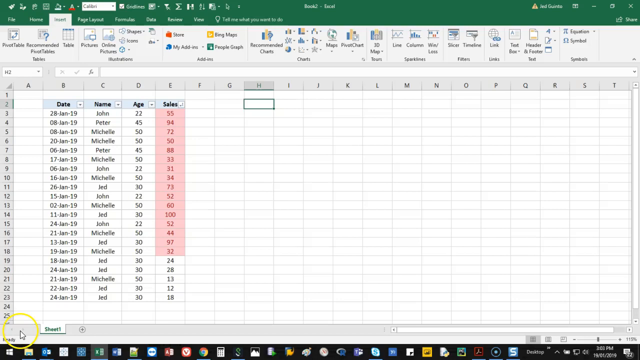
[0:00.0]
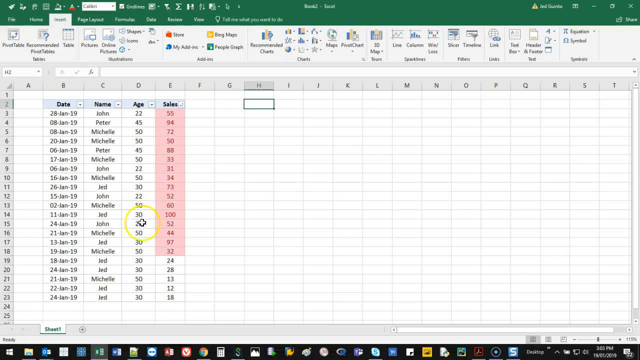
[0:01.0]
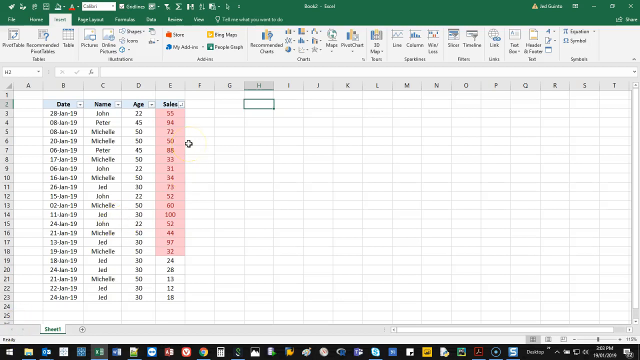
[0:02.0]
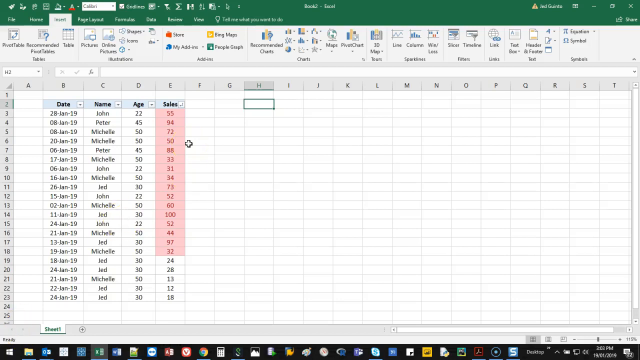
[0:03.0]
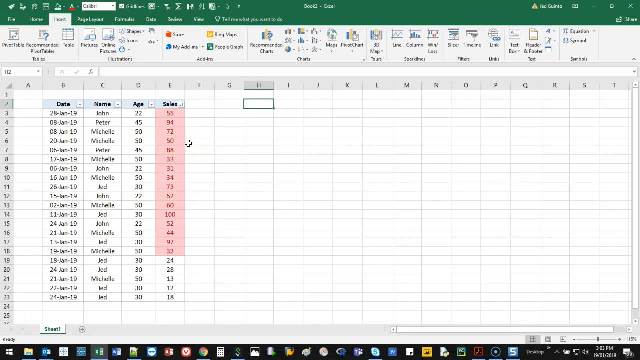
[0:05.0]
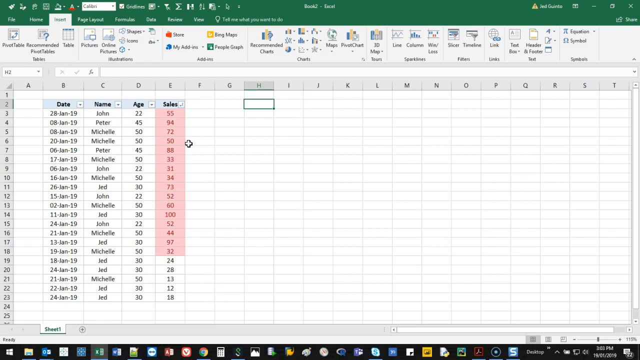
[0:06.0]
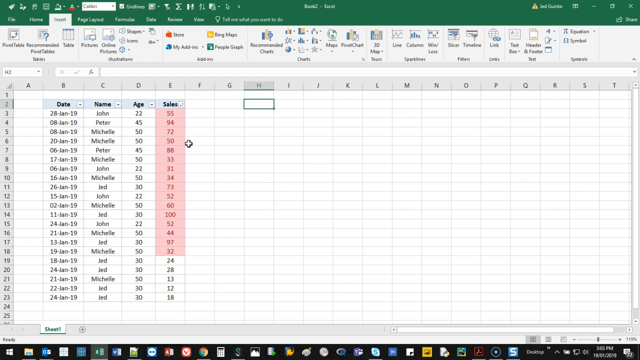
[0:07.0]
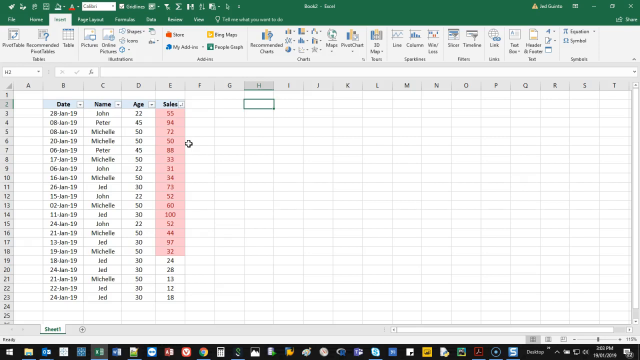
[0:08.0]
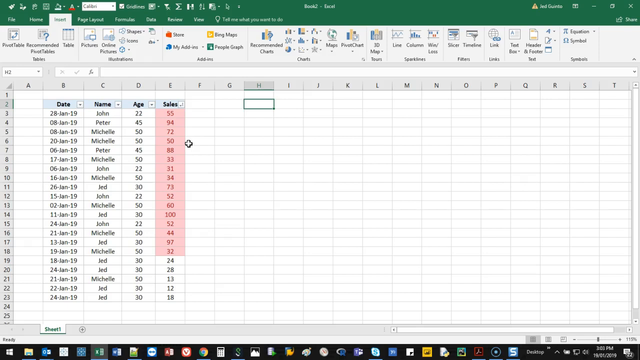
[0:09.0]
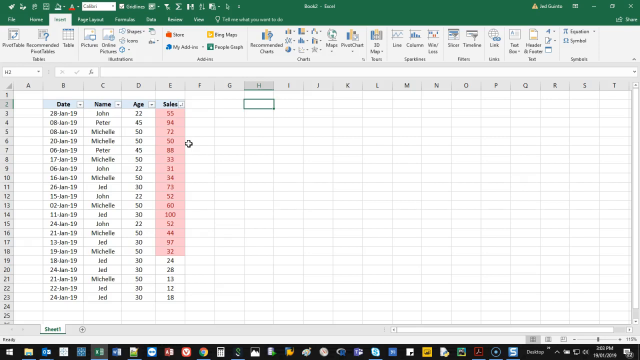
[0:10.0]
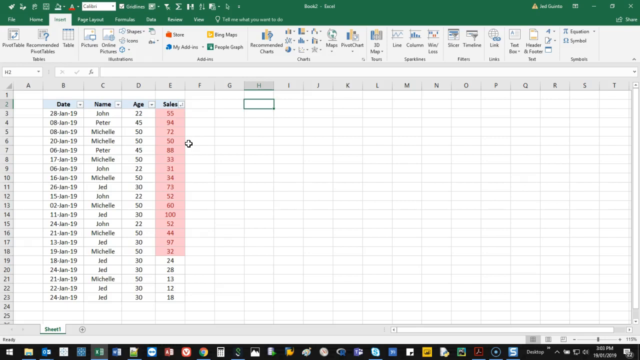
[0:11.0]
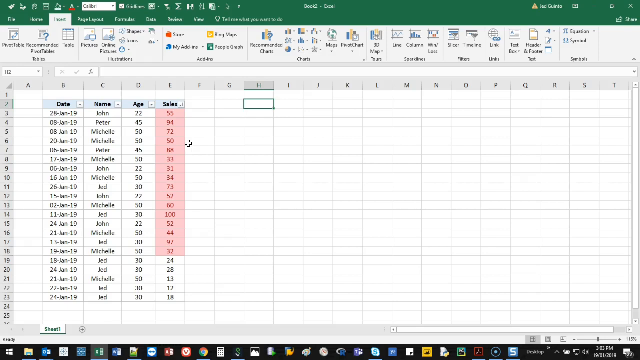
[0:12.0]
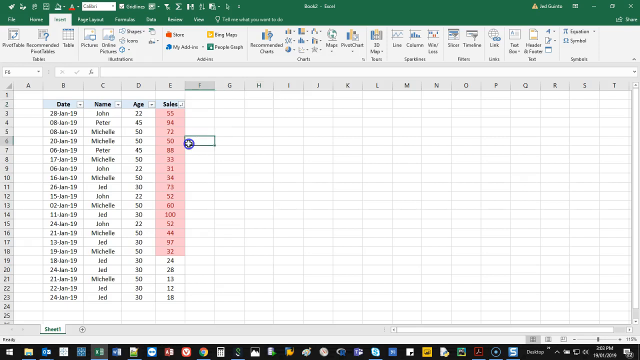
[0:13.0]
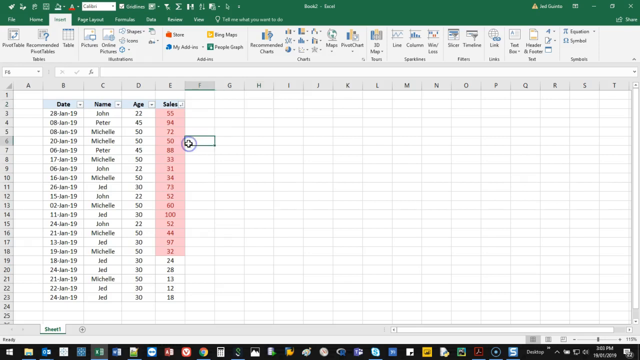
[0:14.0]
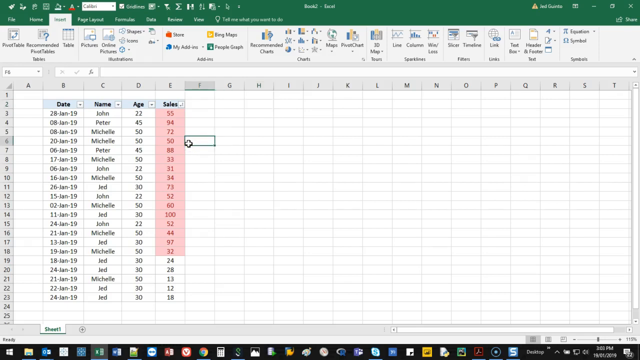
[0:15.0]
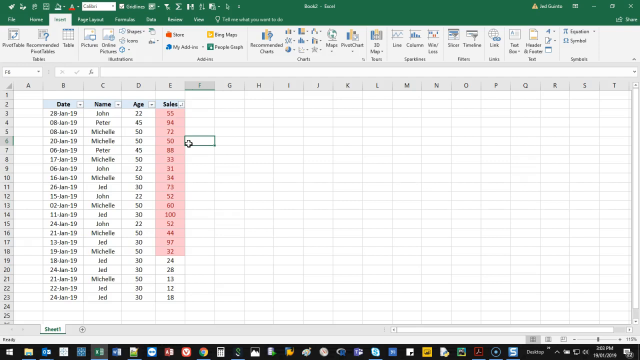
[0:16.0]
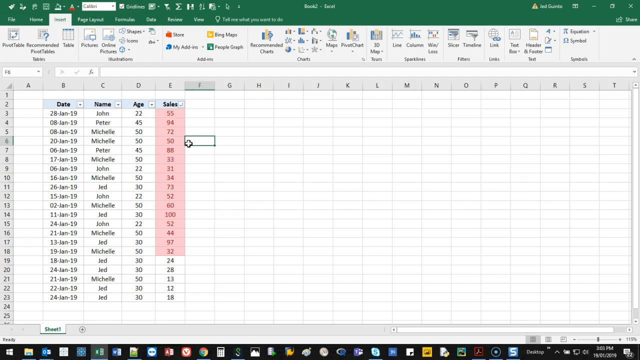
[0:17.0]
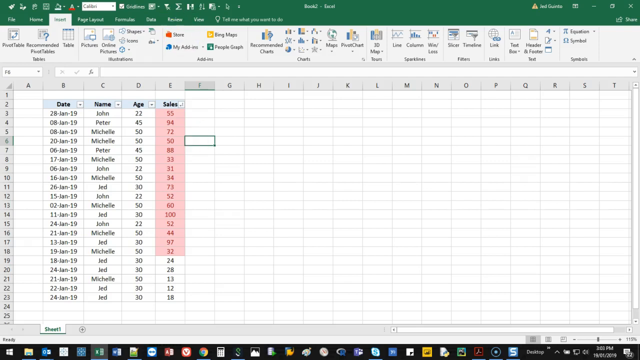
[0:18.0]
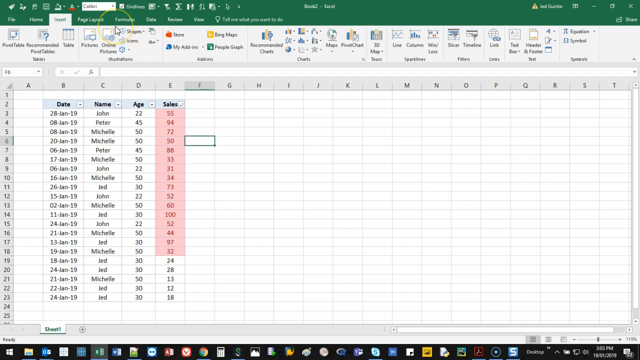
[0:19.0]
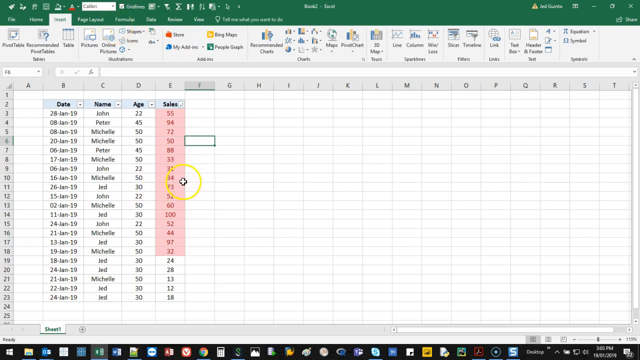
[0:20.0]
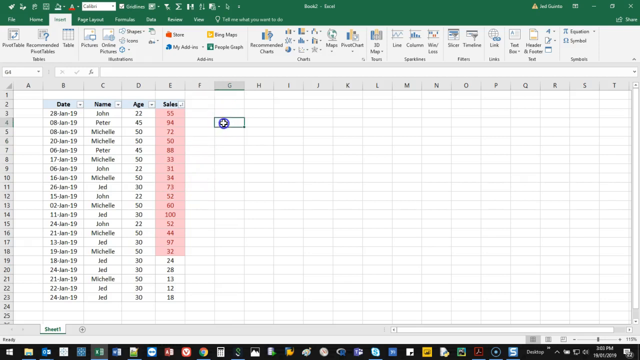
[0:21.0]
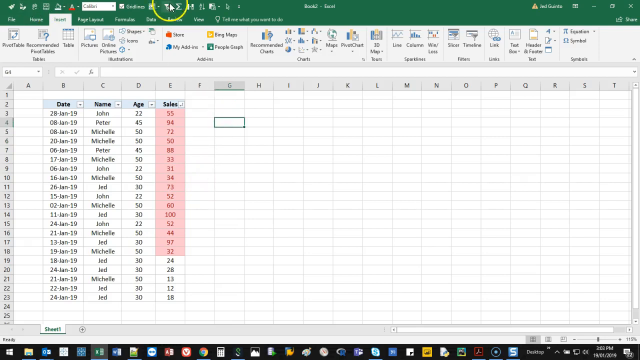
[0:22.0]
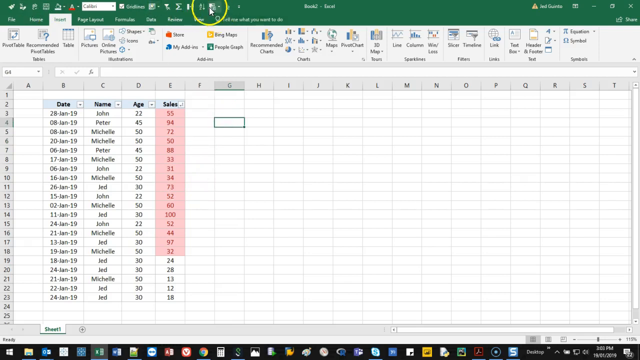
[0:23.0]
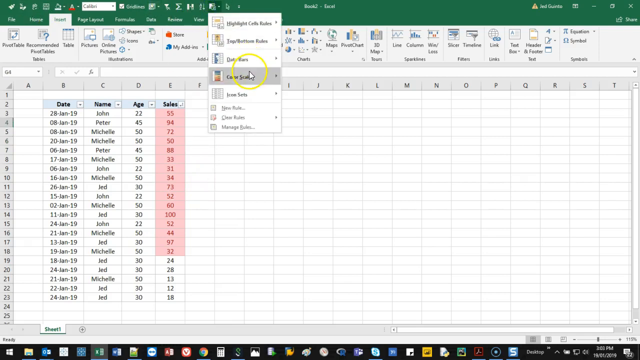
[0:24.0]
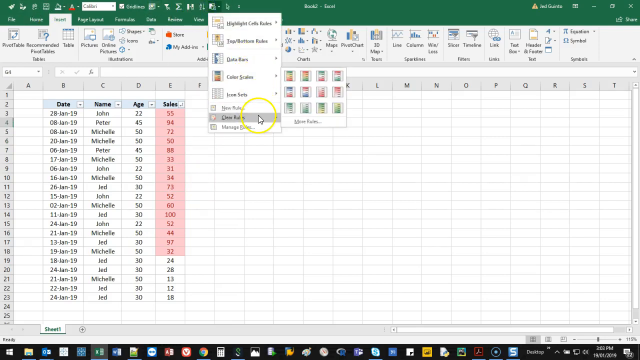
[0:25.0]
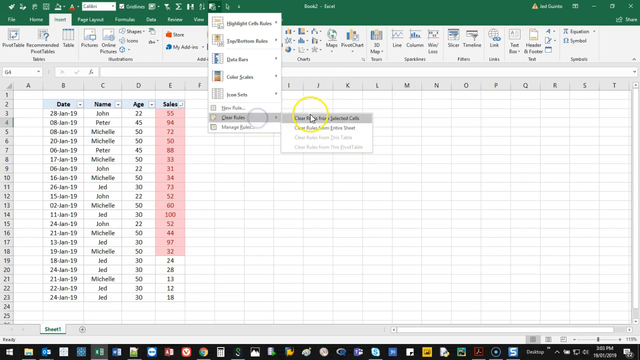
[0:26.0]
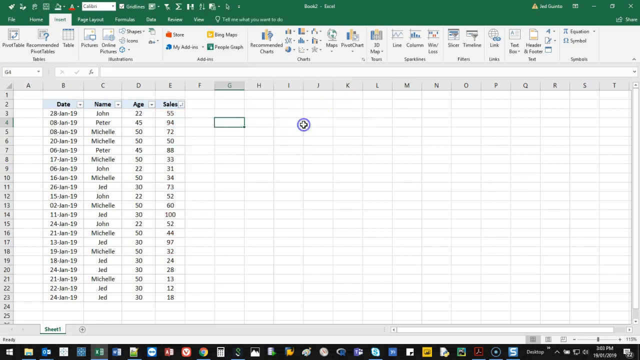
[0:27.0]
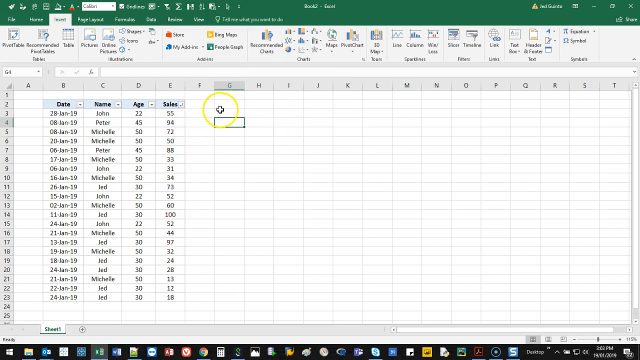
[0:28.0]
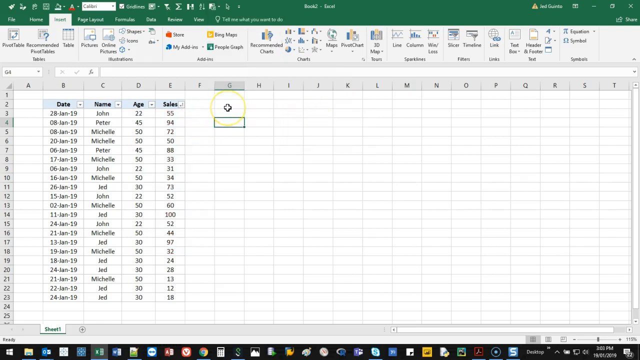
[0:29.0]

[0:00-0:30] An Excel spreadsheet is open with four columns headed date, name, age and sales, with data filled in. Under sales, all of the cells between line 3 and 18 are highlighted in red. The H2 box is selected. The cursor clicks the F6 box, then the G4 box, then goes to the very top of the window and selects the third button from the right, which looks somewhat like a white square with a smaller, darker square in front of it. A drop-down menu appears. The user clicks on color scales, which opens a sub-menu on the right showing rectangular boxes with different color palettes. The user then goes down the main menu to Clear Rules, which opens another submenu to the right, and selects Clear Rules from Entire Sheet. Then the G2 cell is selected.